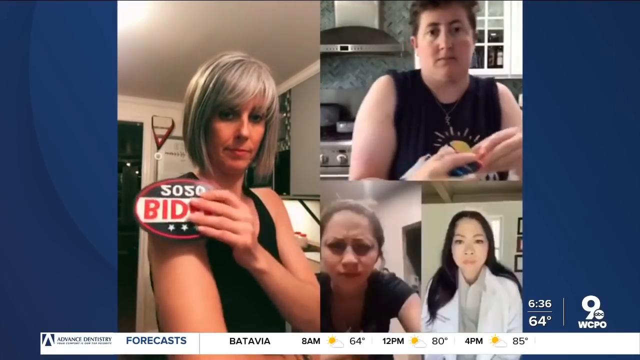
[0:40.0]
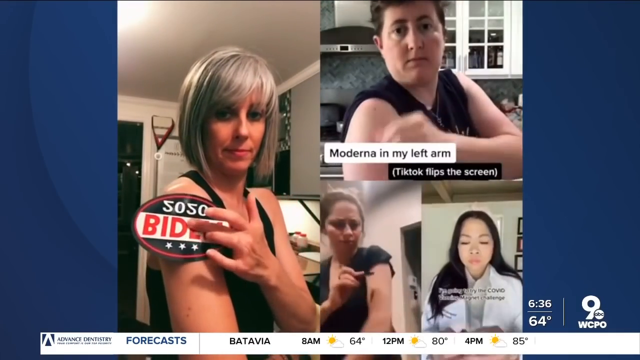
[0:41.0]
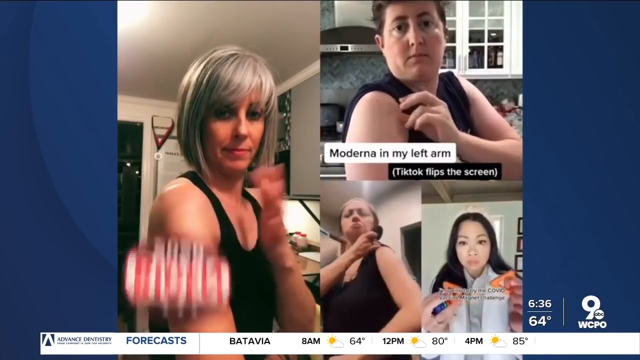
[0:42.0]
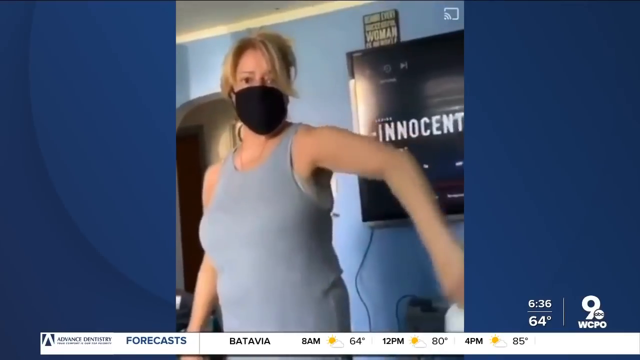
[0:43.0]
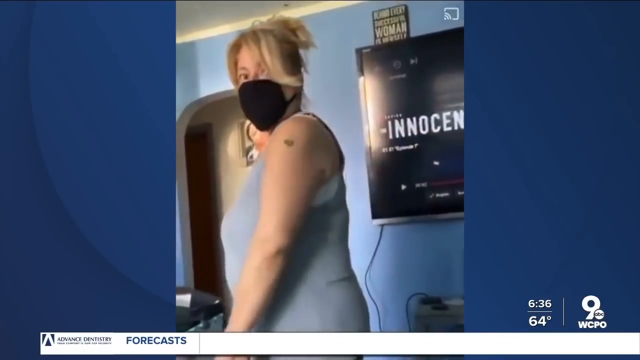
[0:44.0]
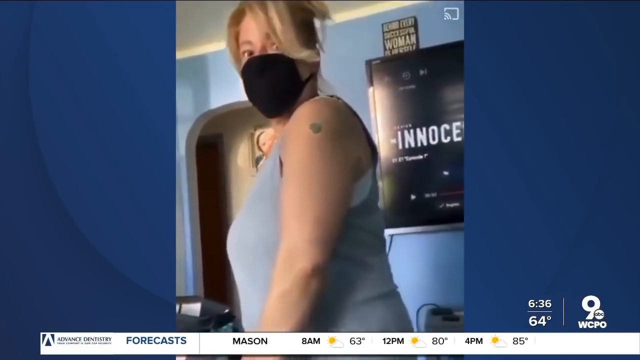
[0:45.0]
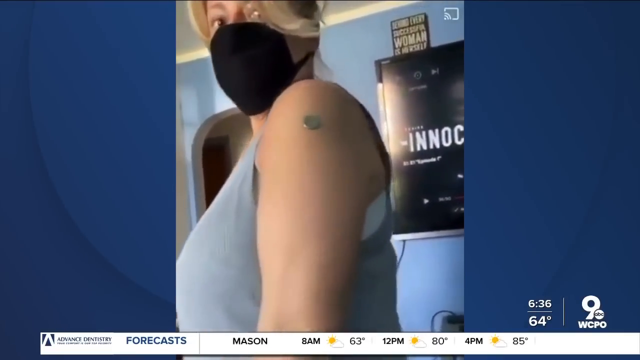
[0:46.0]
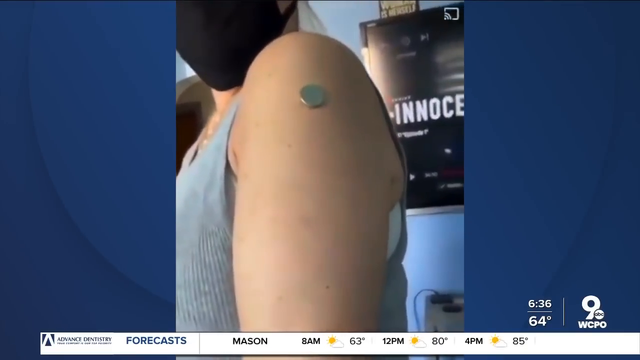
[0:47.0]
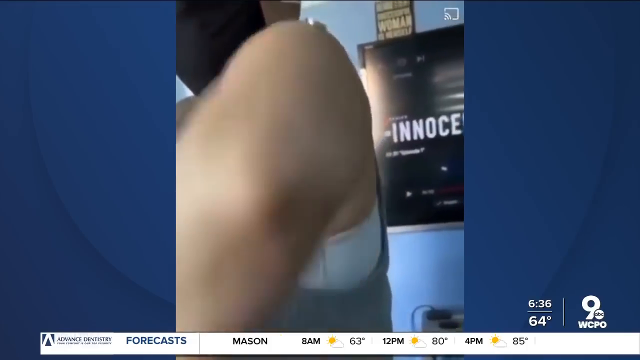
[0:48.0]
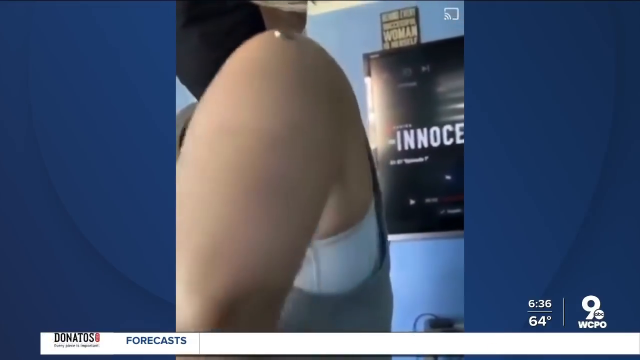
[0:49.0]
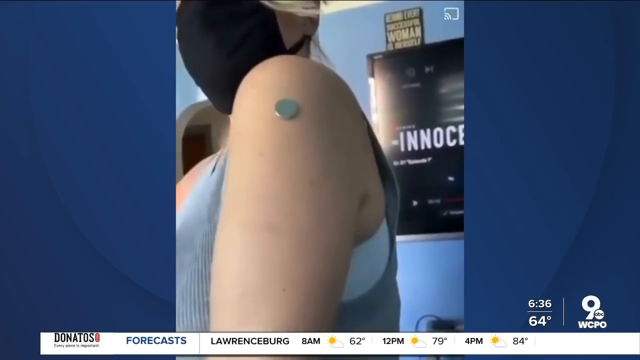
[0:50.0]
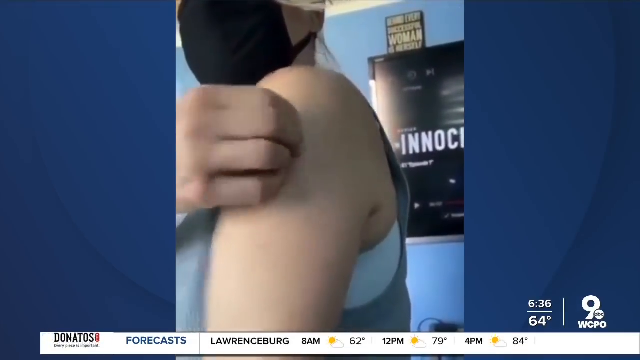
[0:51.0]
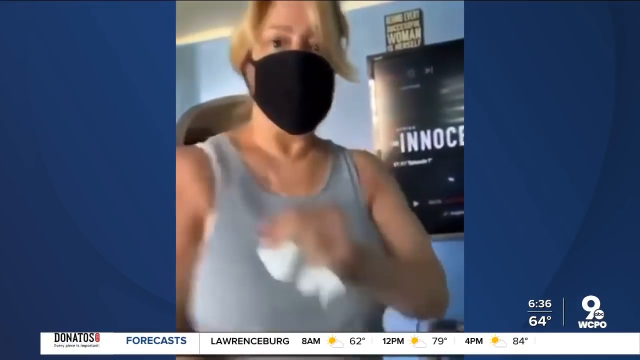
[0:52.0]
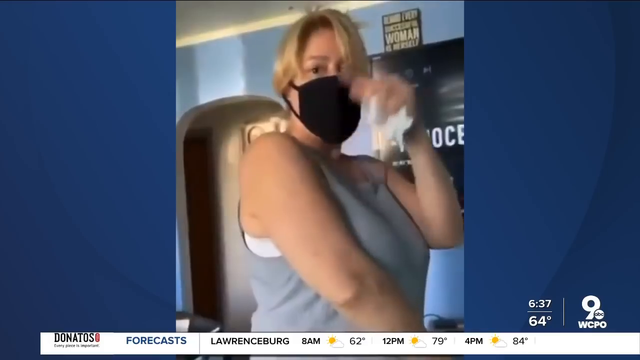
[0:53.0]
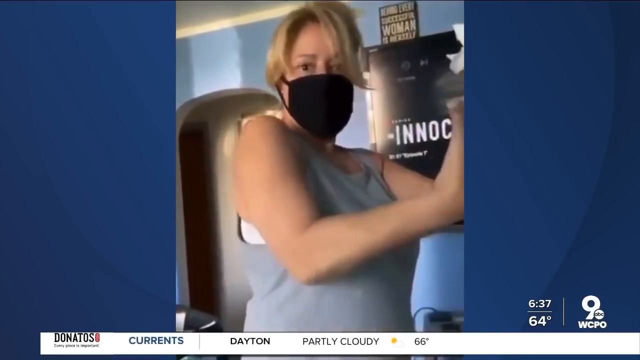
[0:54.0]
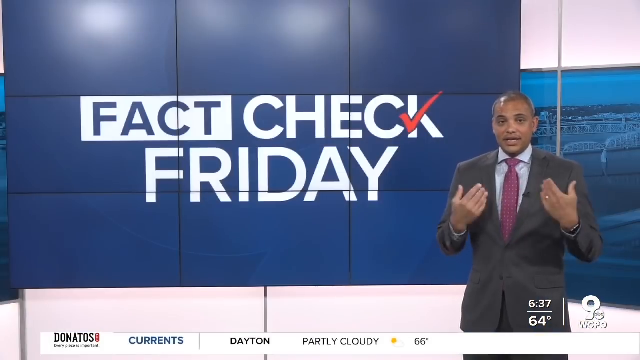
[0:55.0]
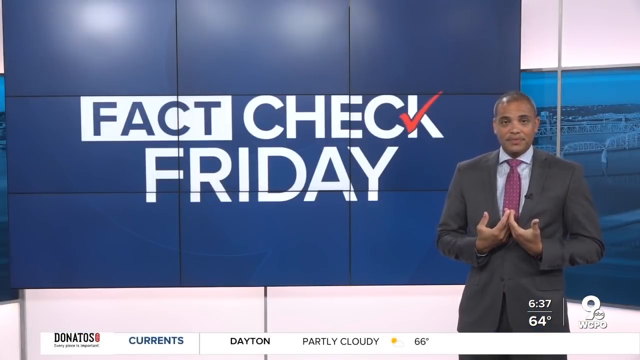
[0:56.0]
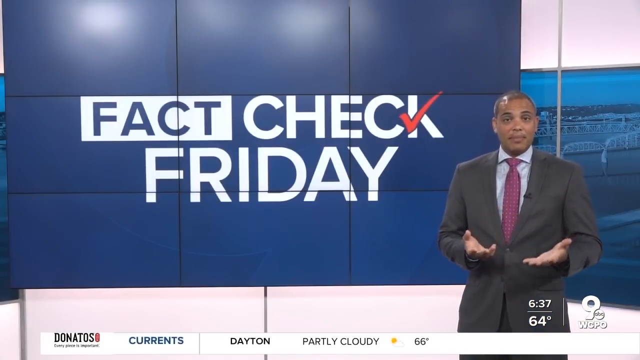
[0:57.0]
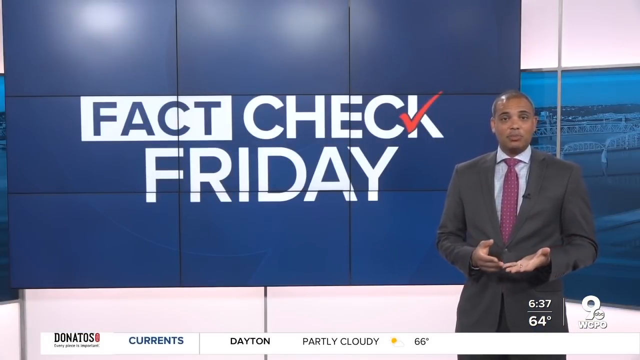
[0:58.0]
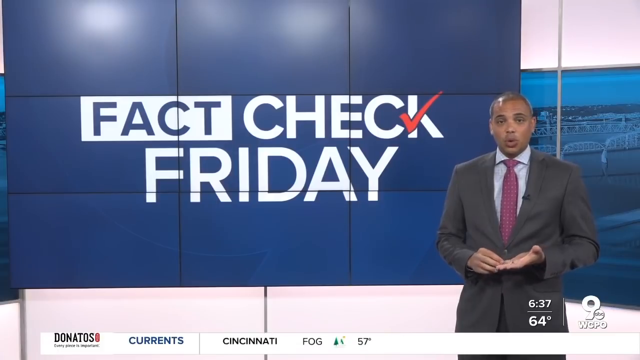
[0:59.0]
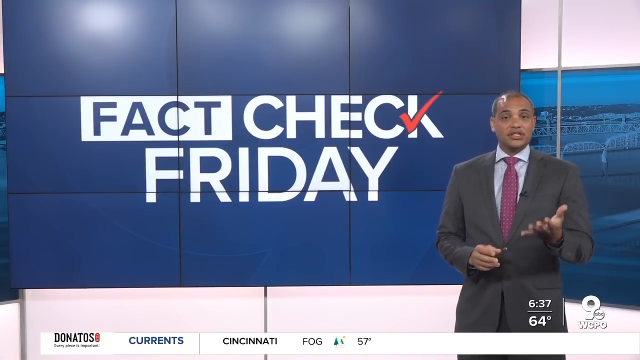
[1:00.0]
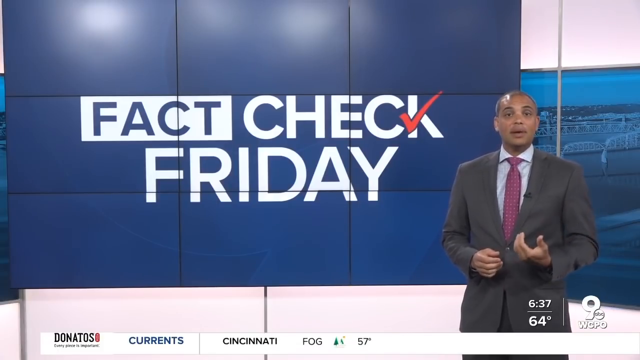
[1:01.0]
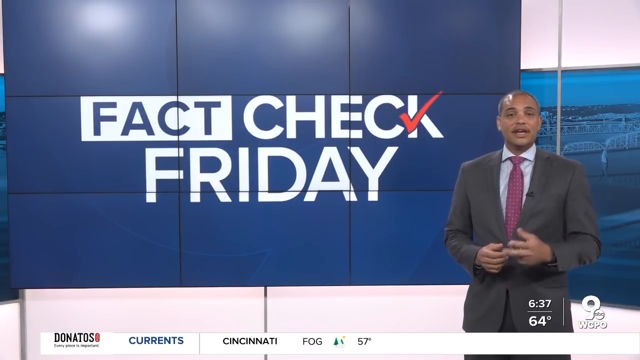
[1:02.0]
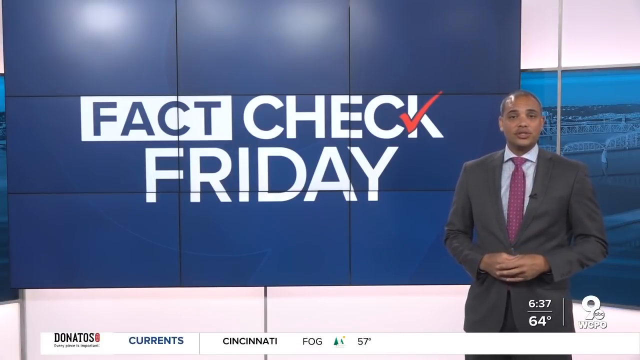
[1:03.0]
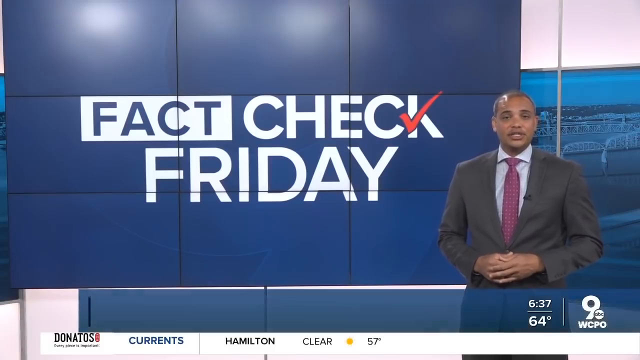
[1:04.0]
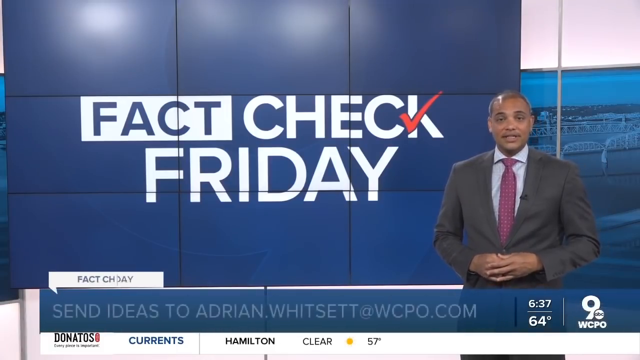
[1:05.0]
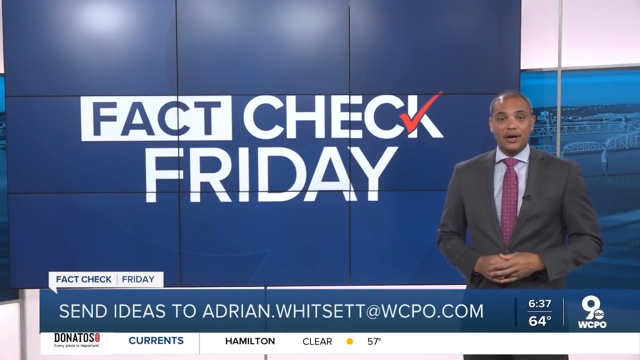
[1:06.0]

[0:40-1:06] An image shows four women pulling up their shirts on their arms, each holding a refrigerator magnet or some kind of magnetized object against their arm. A white text box with black lettering reads "Moderna is in my left arm." In the bottom right-hand corner, what appears to be an Asian doctor is faintly visible. Another woman, wearing a mask, shows a nickel, a quarter or something similar stuck to the upper part of her arm, with a TV and a blue wall in the background, and she shows it from different sides. The video then returns to the news anchor and the Fact Check Friday segment of the broadcast.